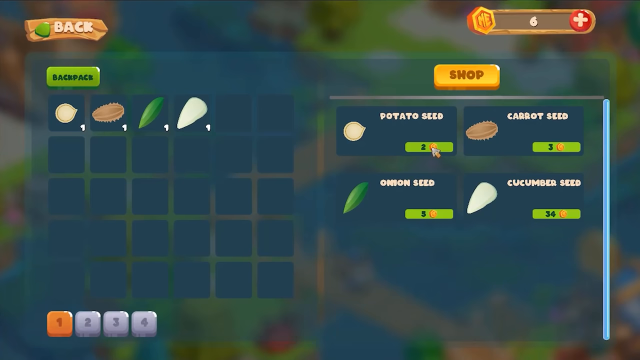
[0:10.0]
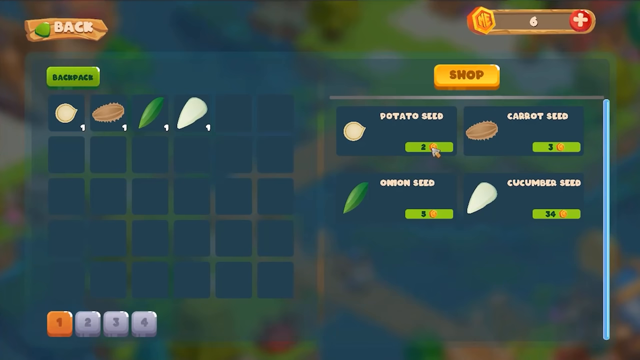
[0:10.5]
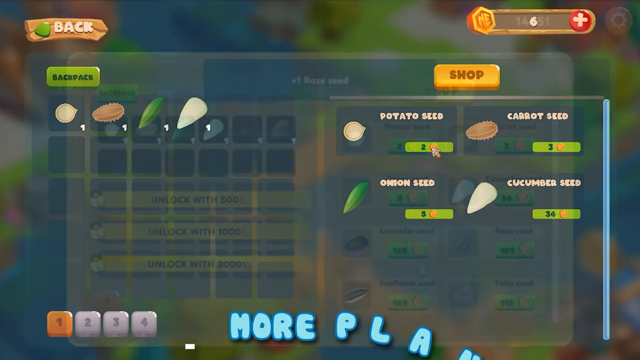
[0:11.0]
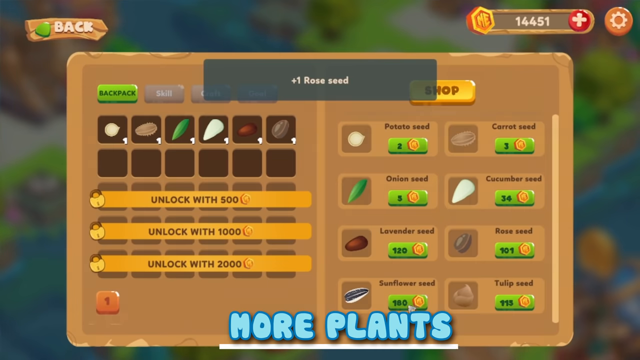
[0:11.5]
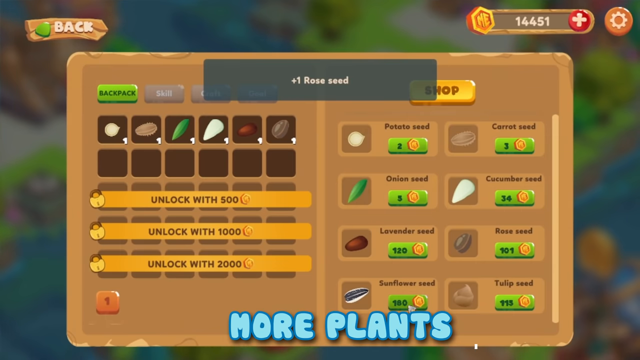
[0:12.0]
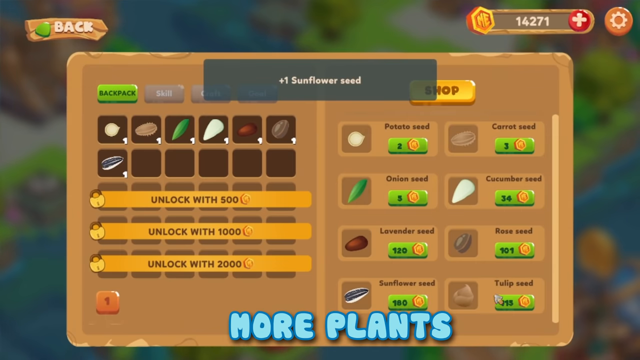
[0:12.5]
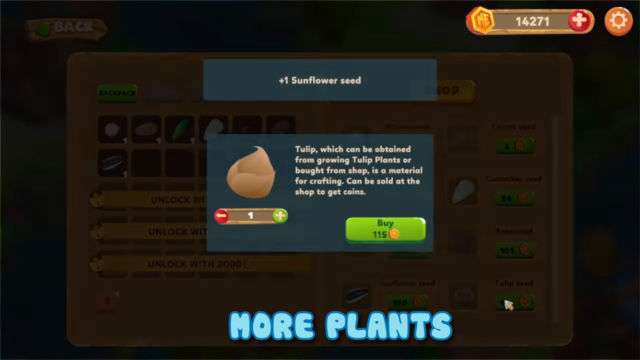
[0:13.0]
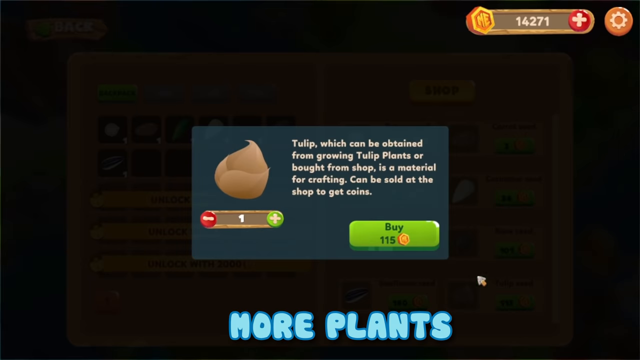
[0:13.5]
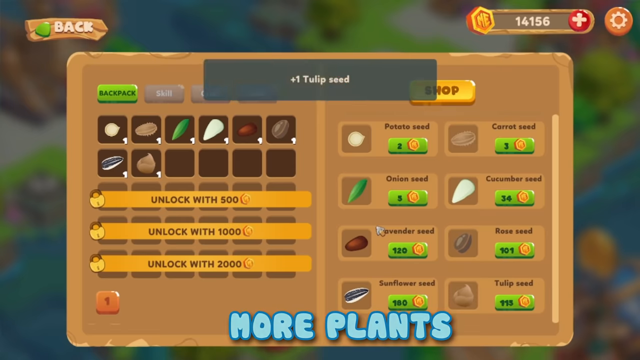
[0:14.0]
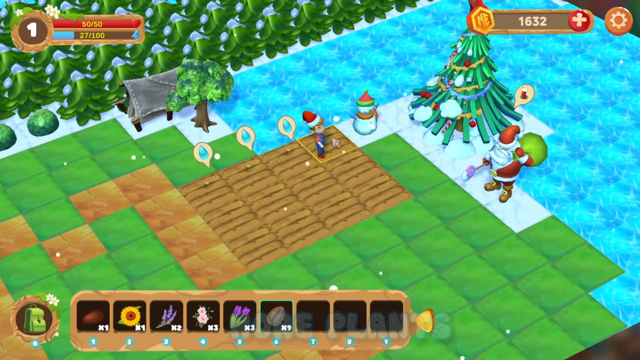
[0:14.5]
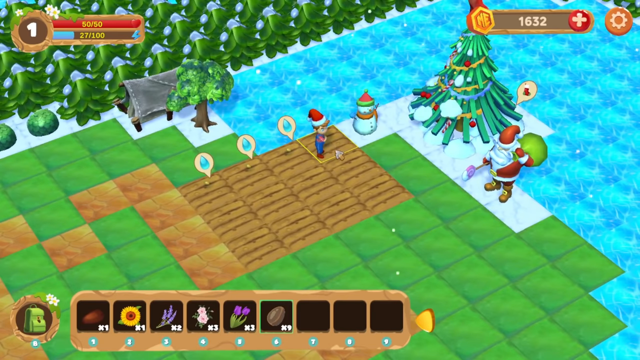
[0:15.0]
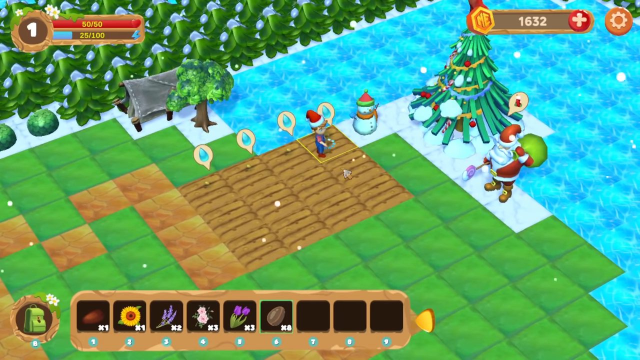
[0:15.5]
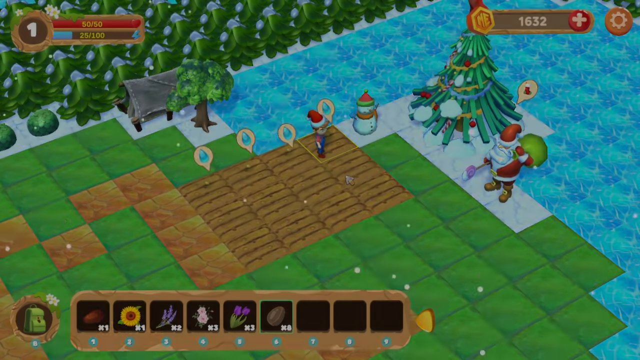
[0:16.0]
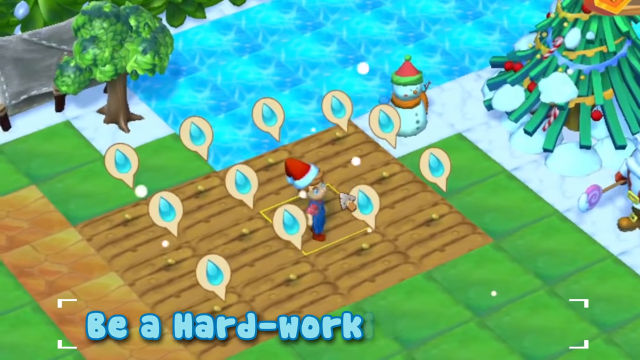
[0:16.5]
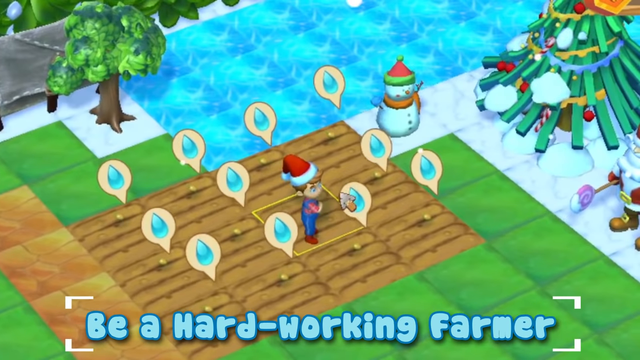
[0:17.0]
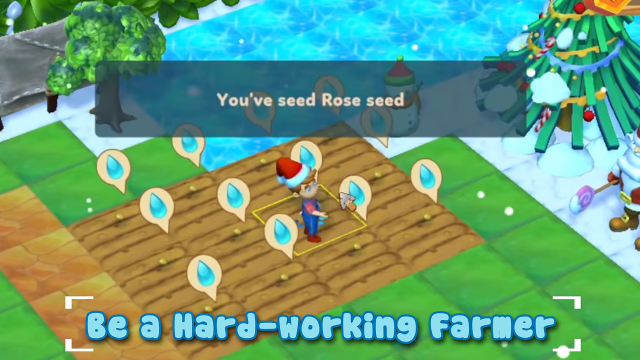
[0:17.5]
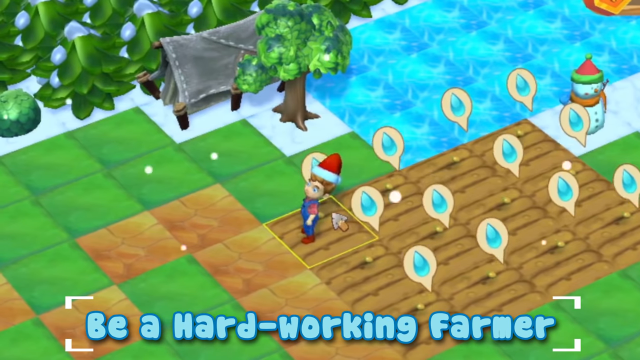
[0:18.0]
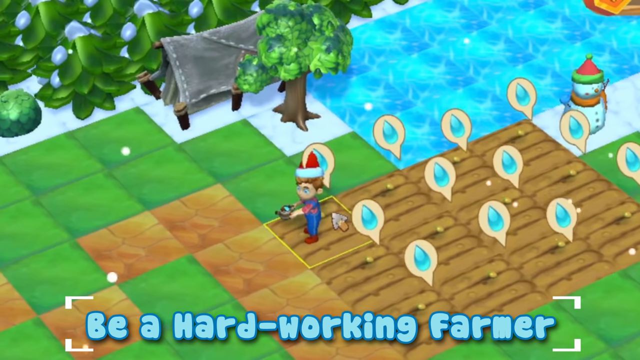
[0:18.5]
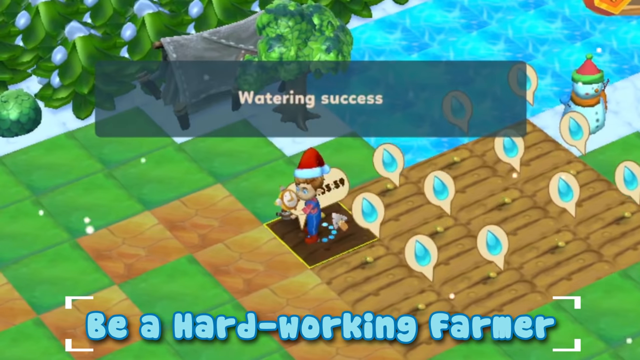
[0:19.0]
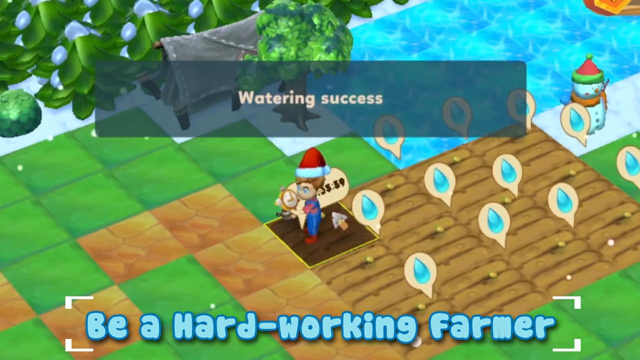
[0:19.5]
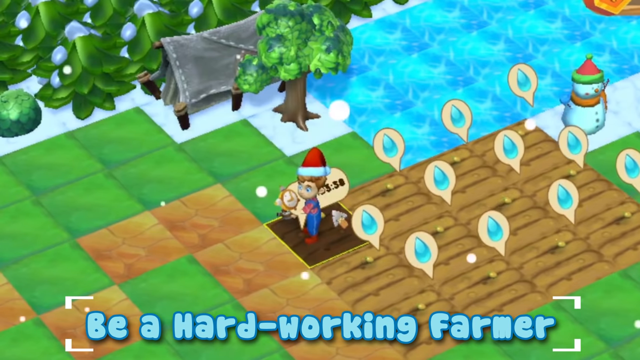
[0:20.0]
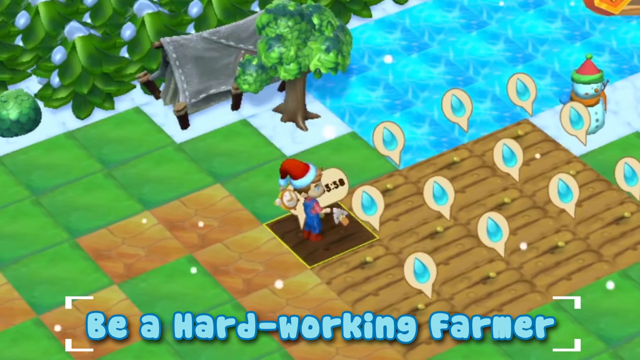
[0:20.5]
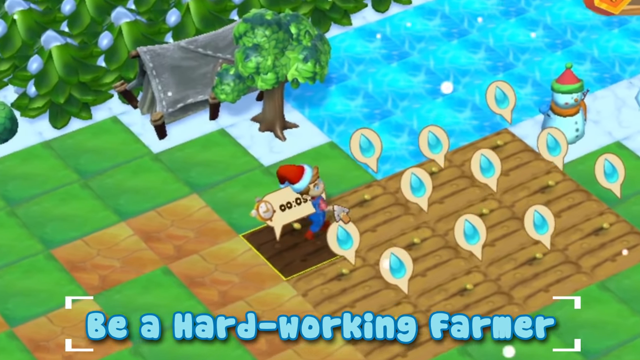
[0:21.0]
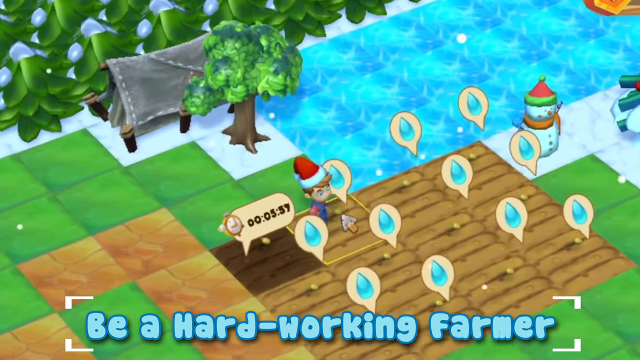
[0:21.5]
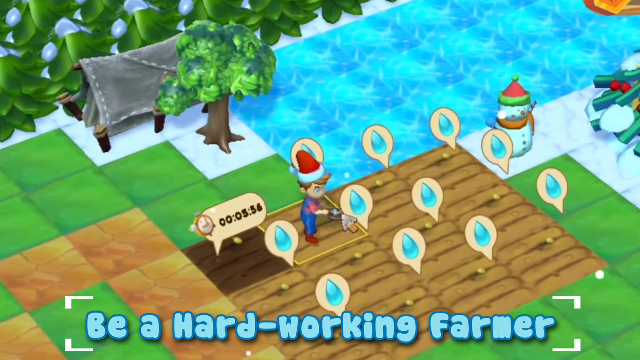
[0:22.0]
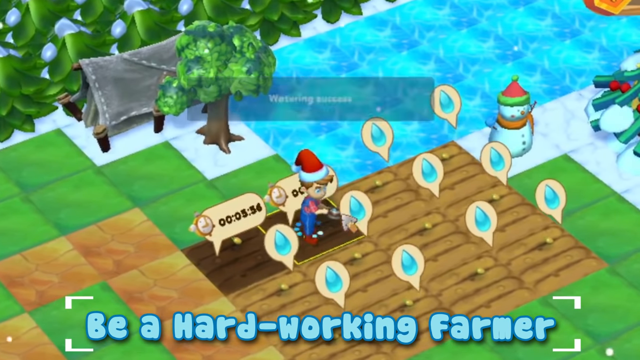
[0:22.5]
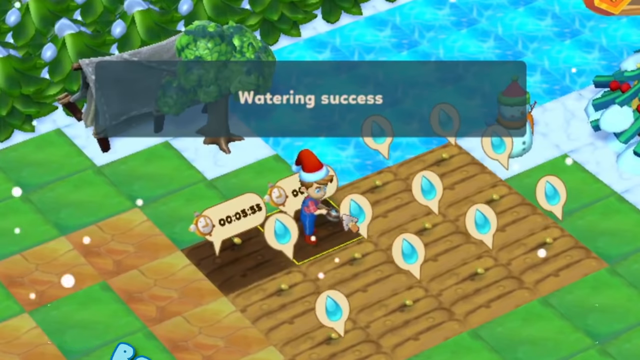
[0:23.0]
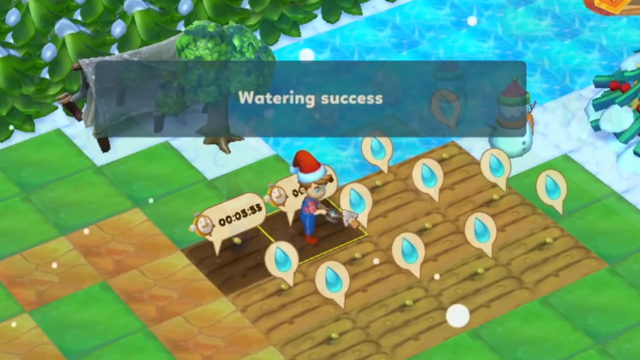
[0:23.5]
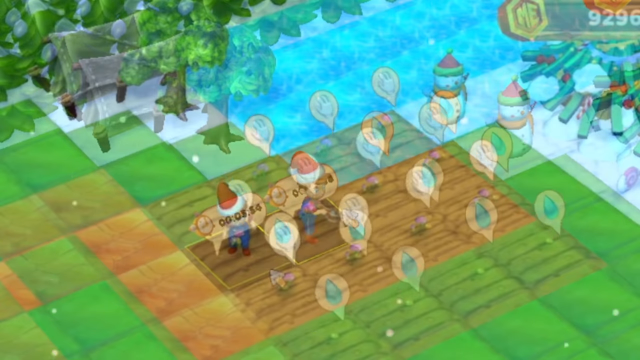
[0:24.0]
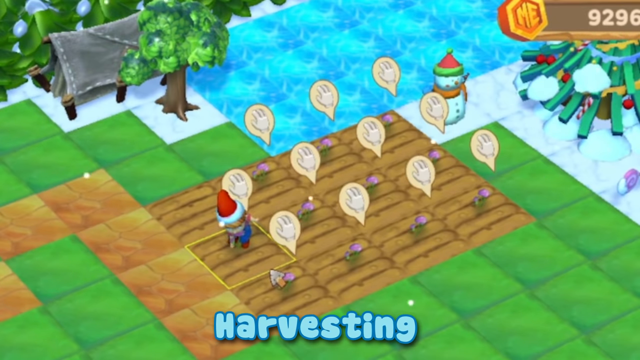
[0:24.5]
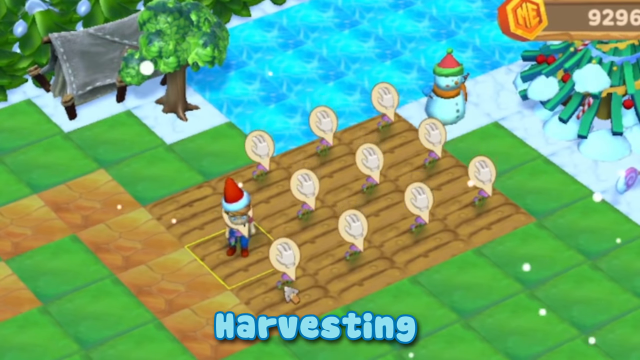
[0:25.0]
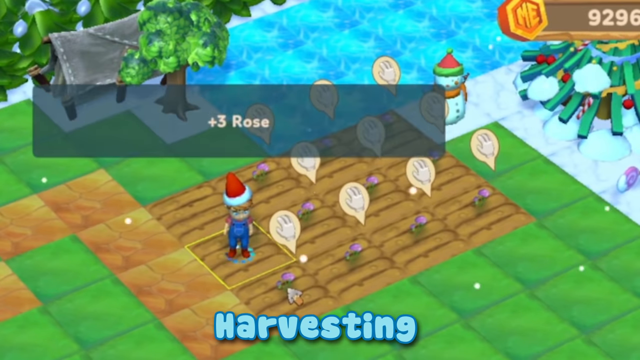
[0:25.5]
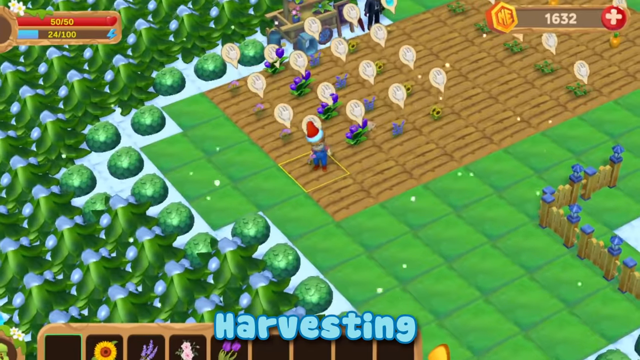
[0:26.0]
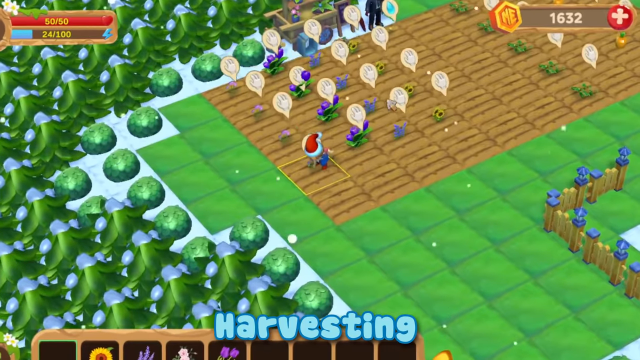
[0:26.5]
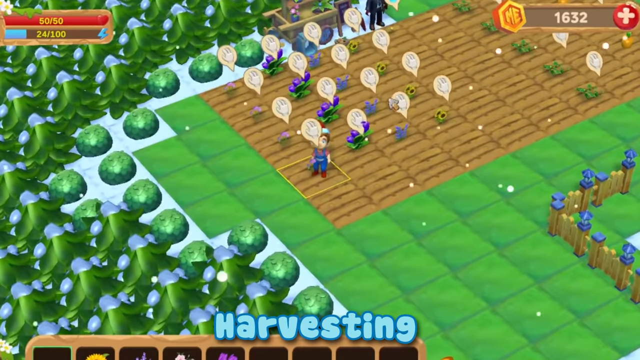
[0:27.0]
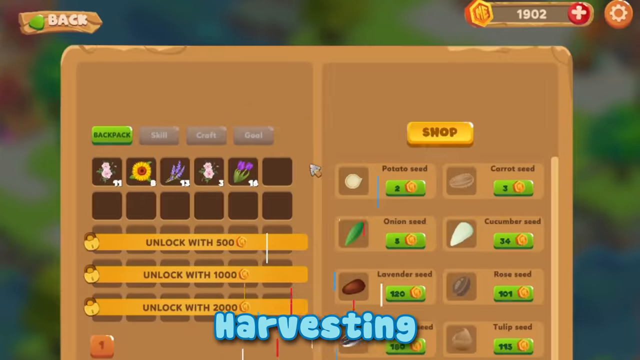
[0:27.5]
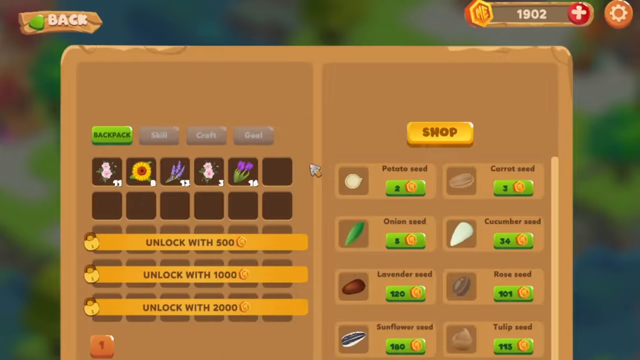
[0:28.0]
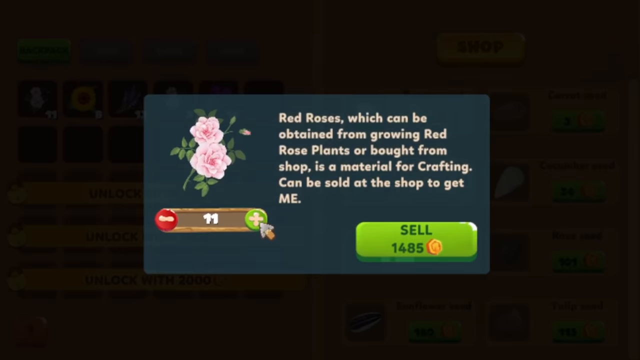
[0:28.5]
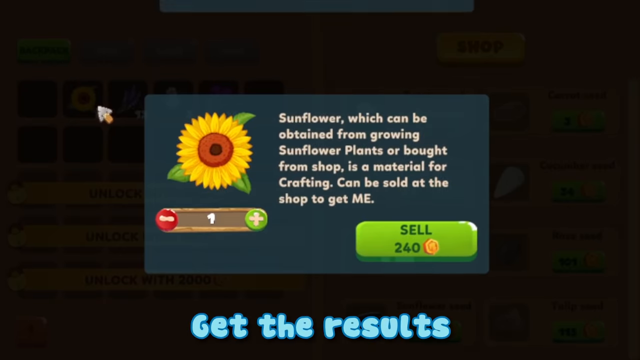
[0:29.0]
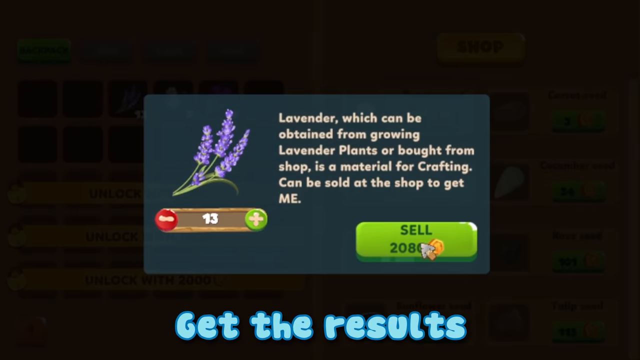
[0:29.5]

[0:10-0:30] The player appears to be buying things in a shop. The screen reads "unlock with 500", "unlock with 1000 coins" and "unlock with 2000 coins", and lists "potato seed", "carrot seed", "onion seed", "cucumber seed", "lavender seed", "rose seed", "sunflower seed" and "tulip seeds", apparently plant seeds that can be planted to make gardens. The player buys tulip seed and looks like they are planting it in their field. A little animated farmer with a red hat and blue overalls waters it, and it apparently grows. The view goes back to the shop, where text reads "sunflower, which can be obtained from growing sunflower plants or brought from shop as material for crafting, can be sold at the shop to get", and descriptions of the different items, such as tulip, are shown.